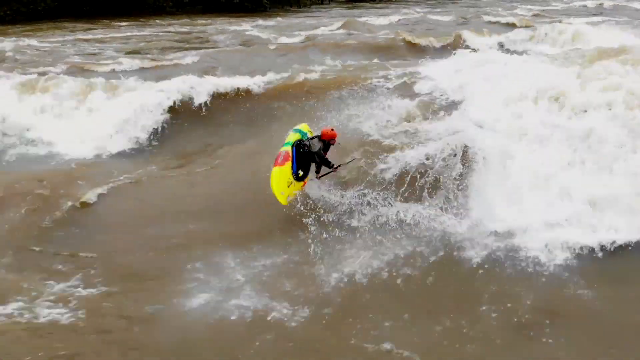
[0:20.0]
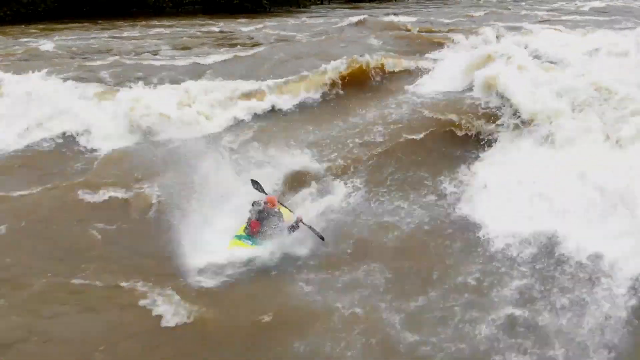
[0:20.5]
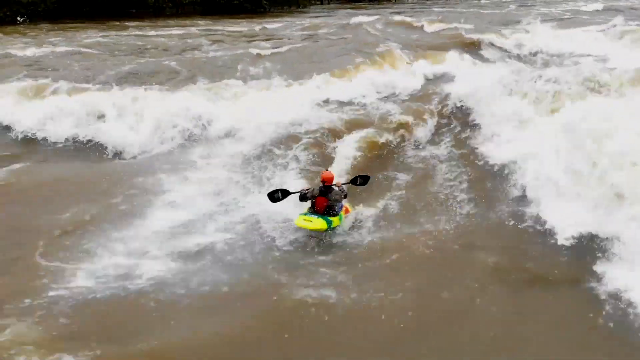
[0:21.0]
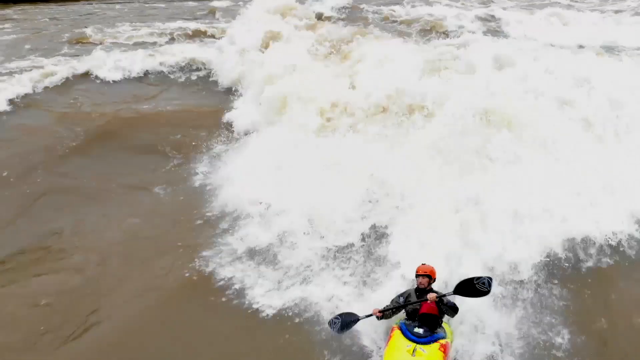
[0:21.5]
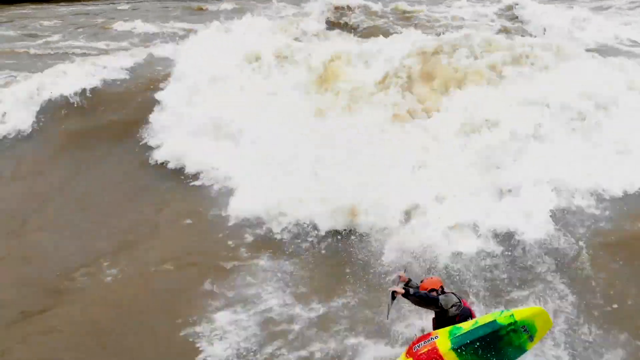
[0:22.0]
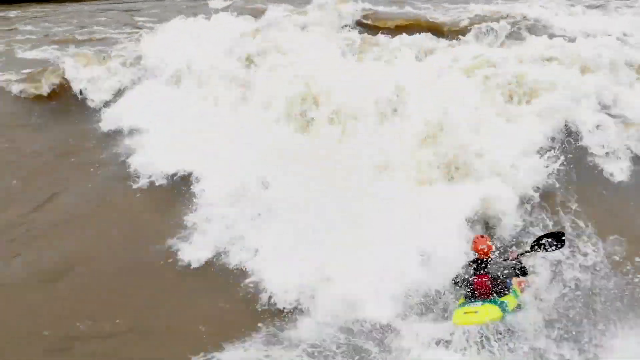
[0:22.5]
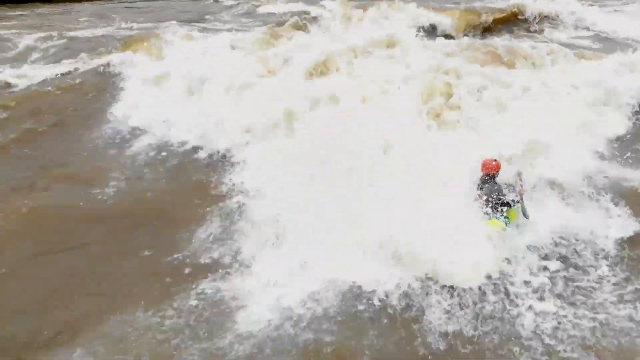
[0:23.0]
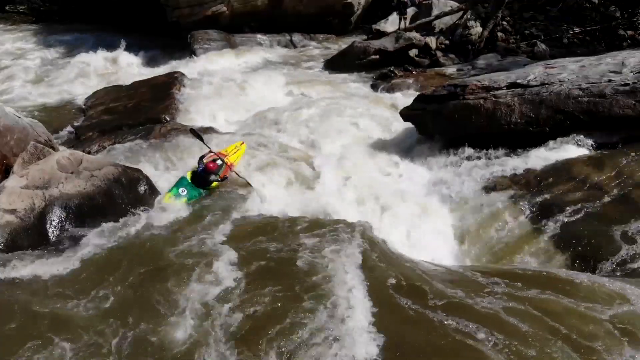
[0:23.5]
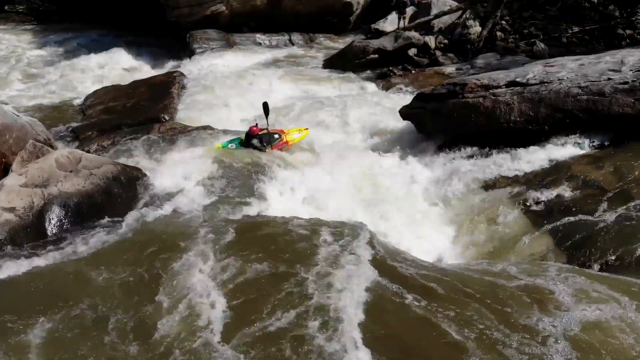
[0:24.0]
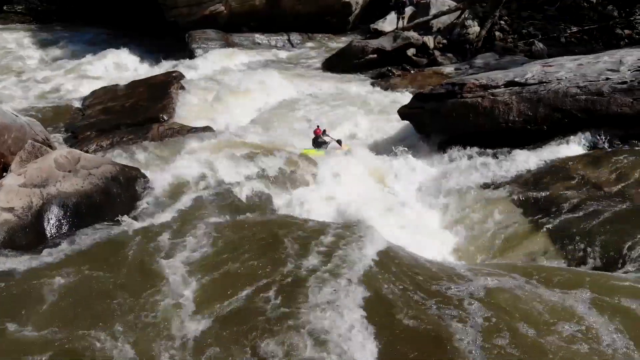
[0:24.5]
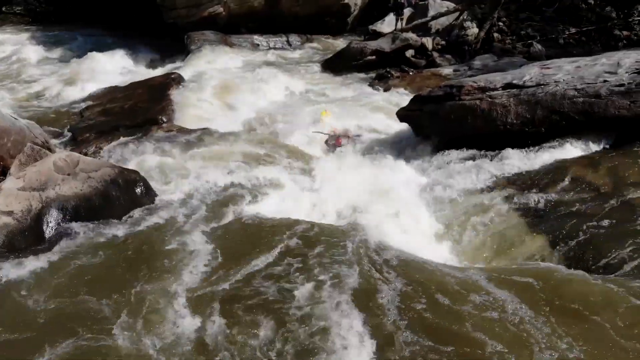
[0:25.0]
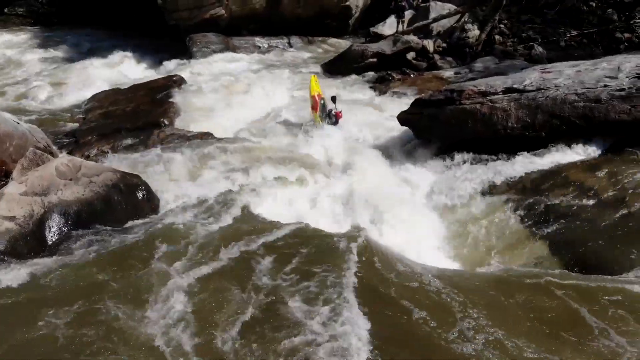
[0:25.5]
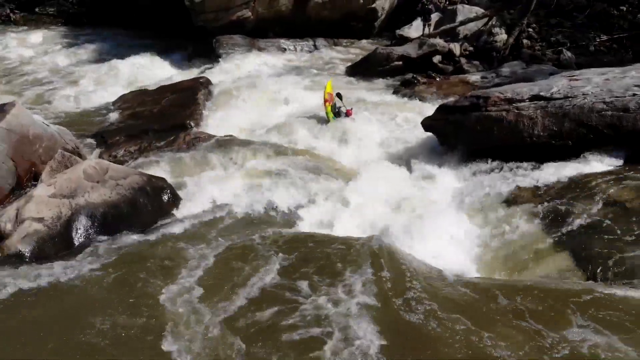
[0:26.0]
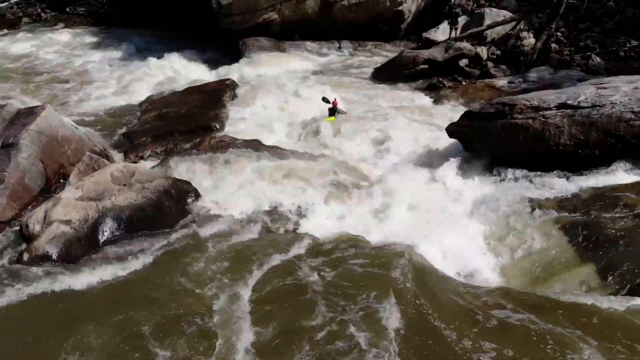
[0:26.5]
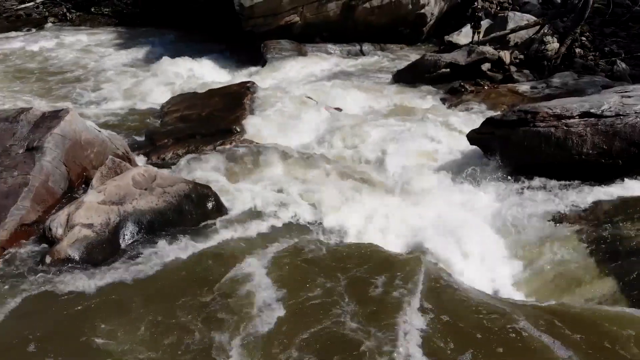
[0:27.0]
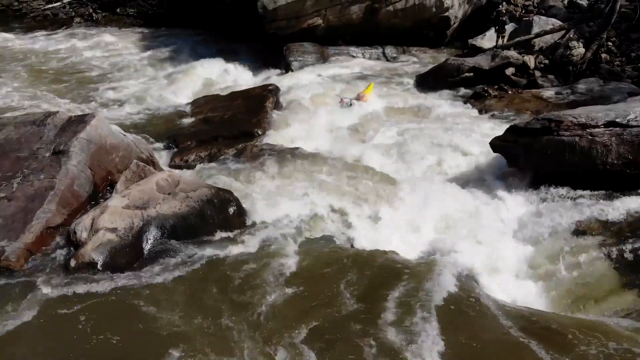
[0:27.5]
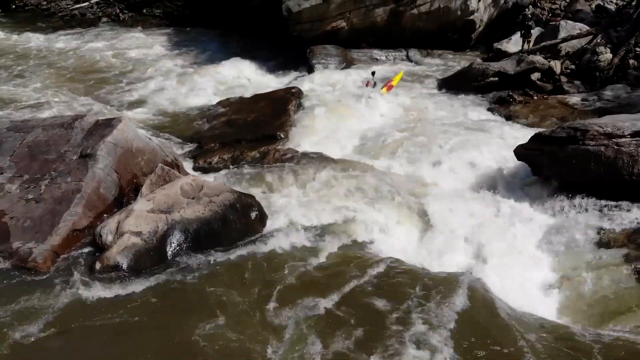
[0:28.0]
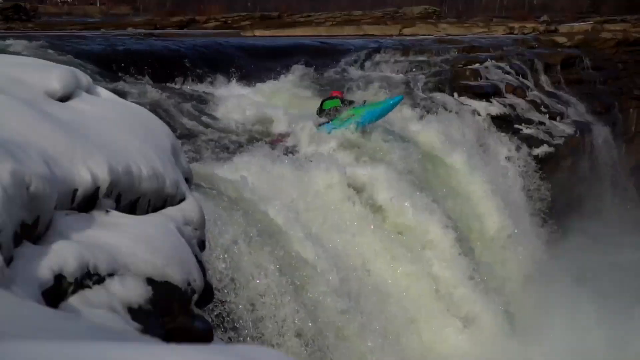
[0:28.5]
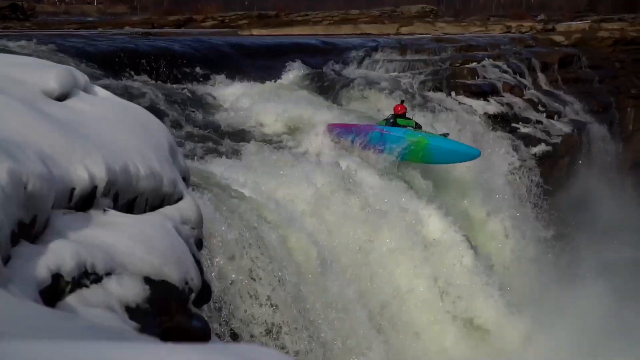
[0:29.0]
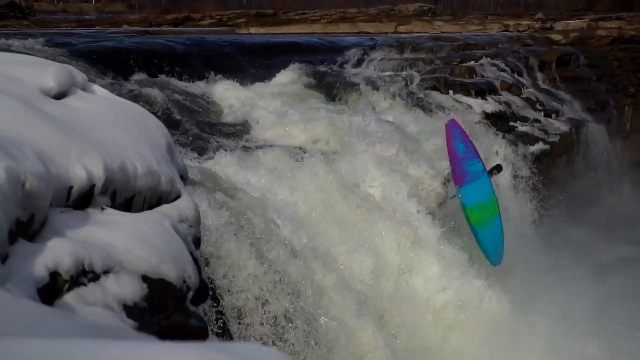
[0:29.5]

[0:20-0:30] Josh Collins continues canoeing as the run seems to become more intense, and he seems to be diving into a waterfall on the high-current stream. The water again seems very dirty, showing a brownish color, possibly from contamination by mud, soil or sand. Near the end he falls into a waterfall, and the water seems a bit cleaner on that side of the stream. After a while, the waterfall becomes visible.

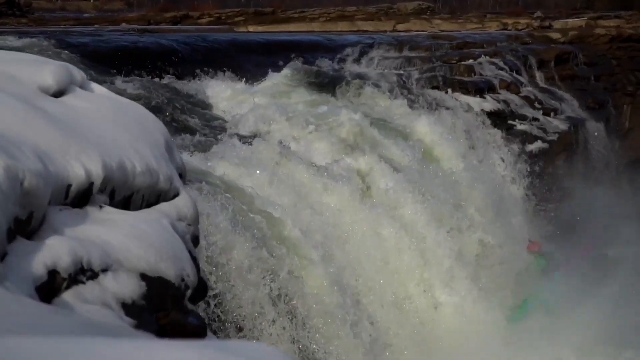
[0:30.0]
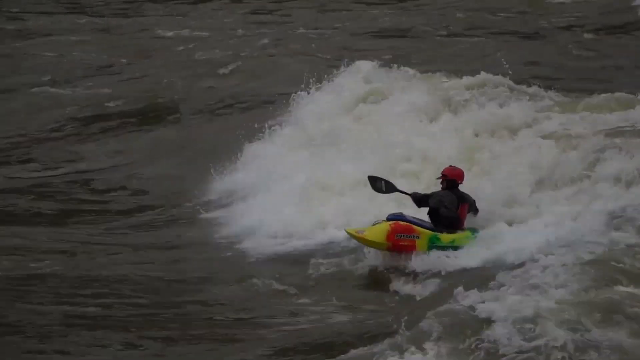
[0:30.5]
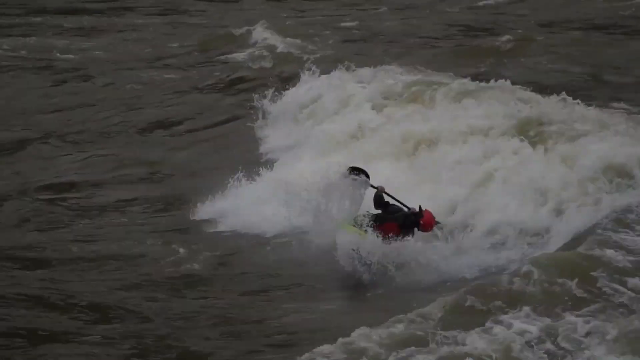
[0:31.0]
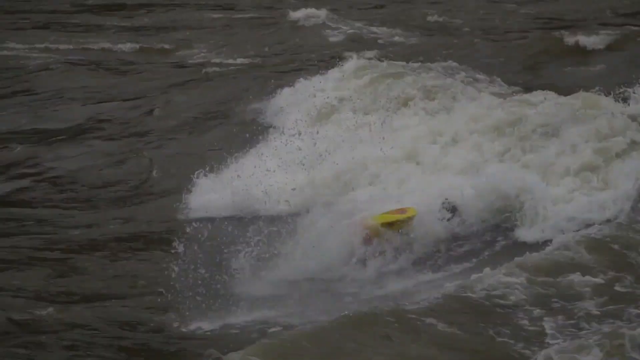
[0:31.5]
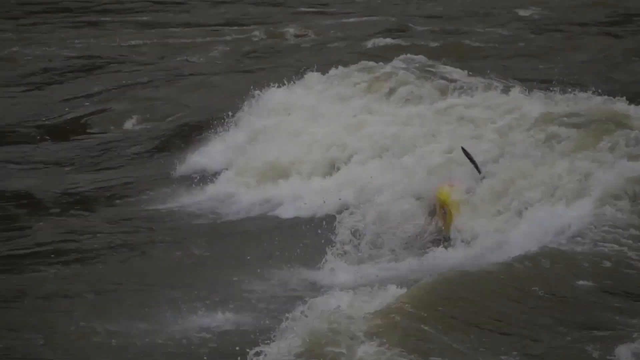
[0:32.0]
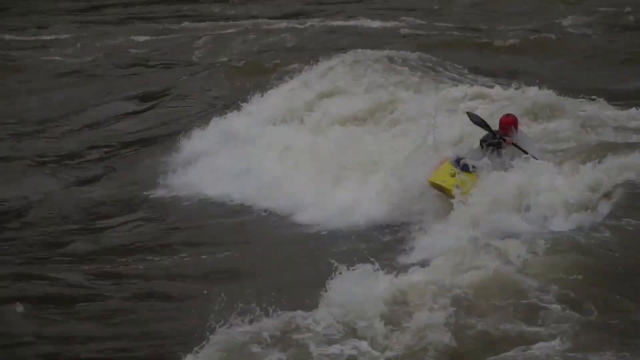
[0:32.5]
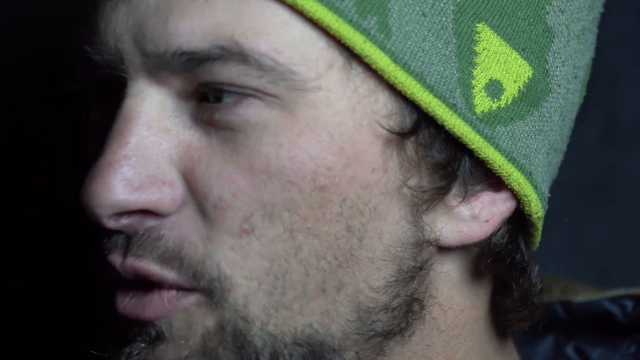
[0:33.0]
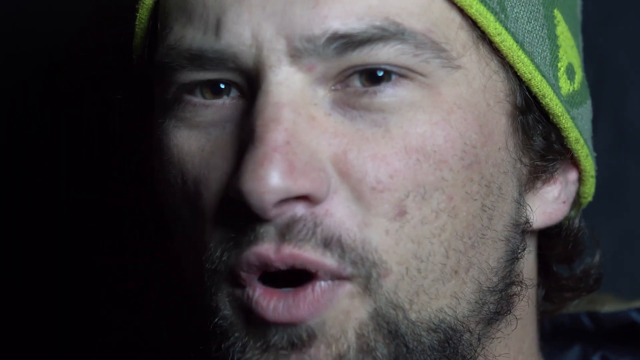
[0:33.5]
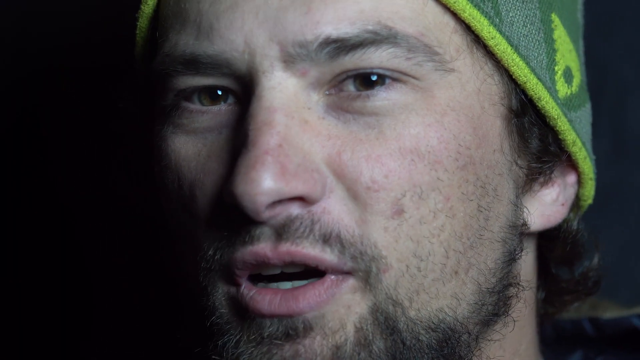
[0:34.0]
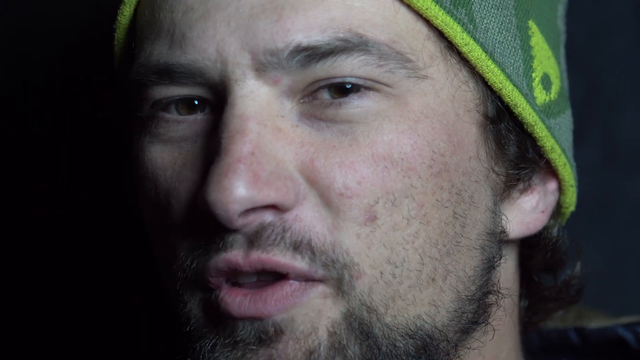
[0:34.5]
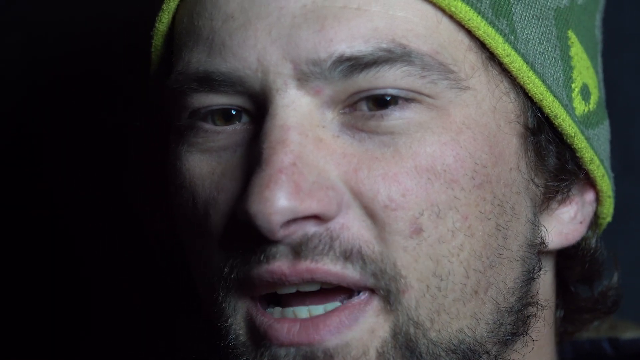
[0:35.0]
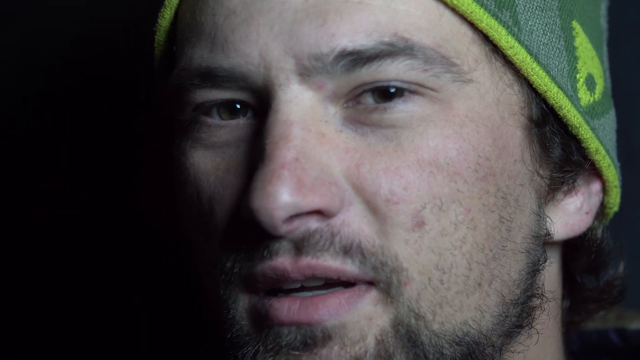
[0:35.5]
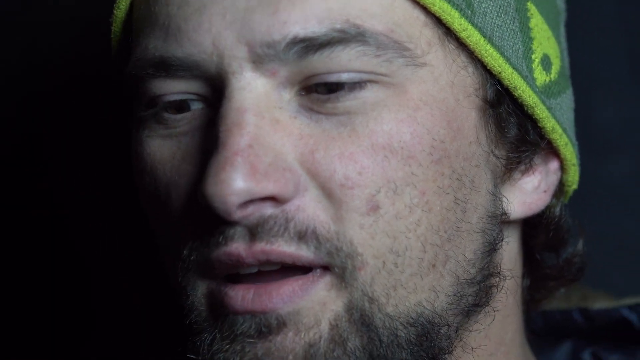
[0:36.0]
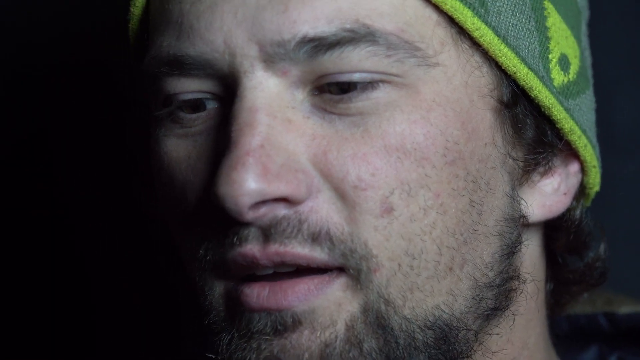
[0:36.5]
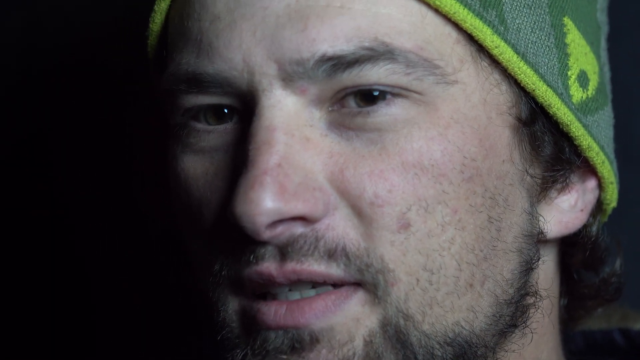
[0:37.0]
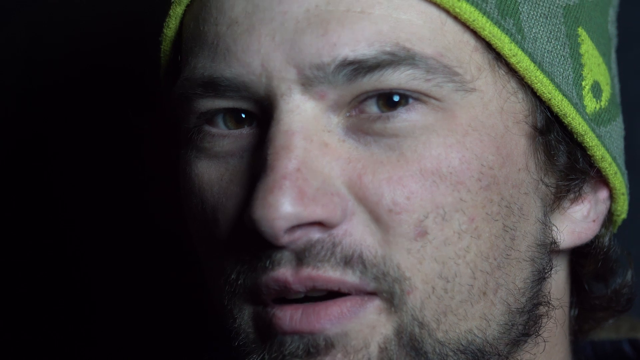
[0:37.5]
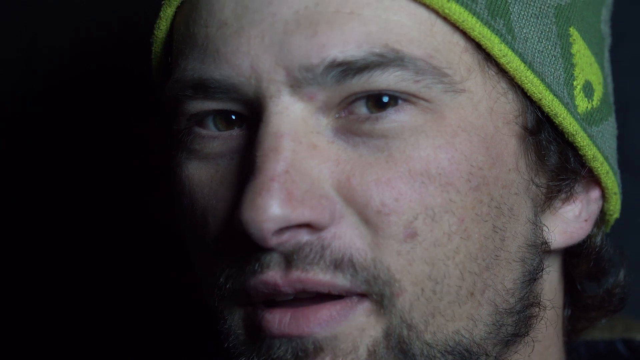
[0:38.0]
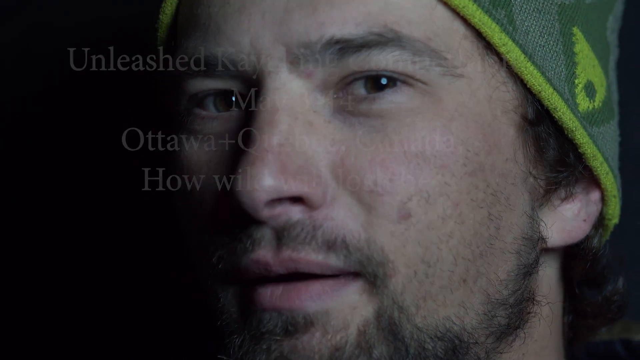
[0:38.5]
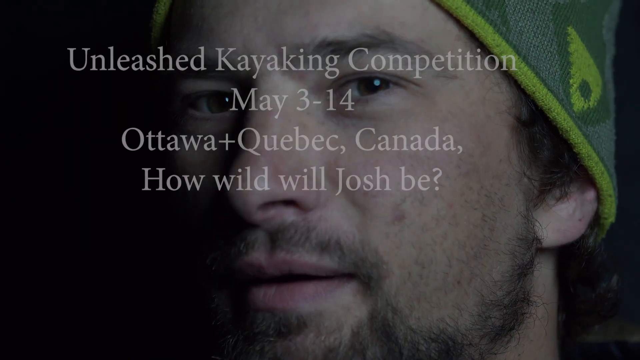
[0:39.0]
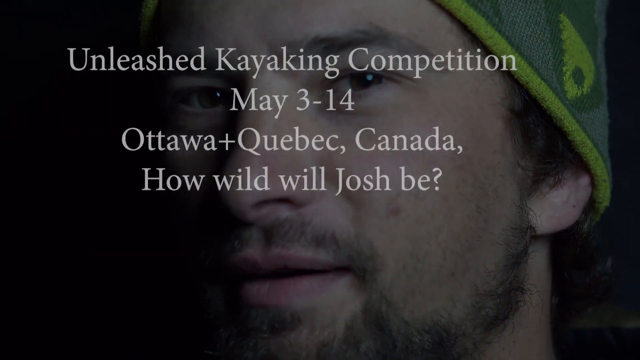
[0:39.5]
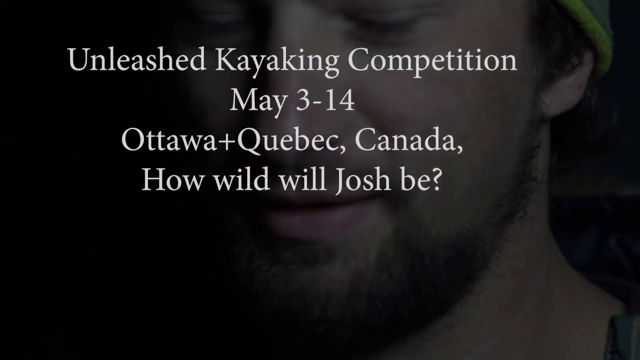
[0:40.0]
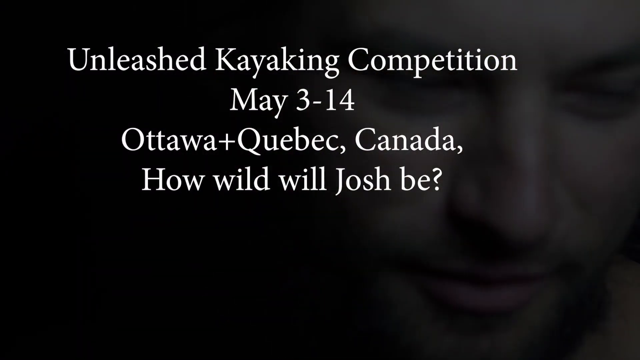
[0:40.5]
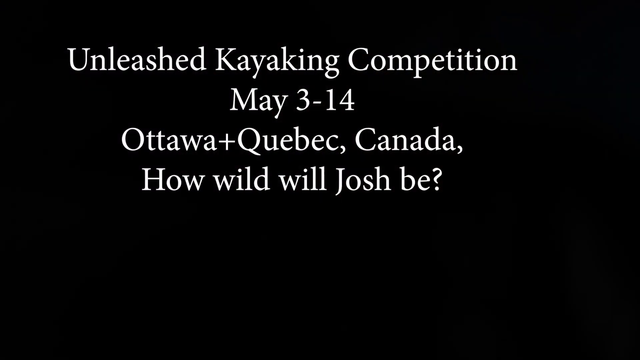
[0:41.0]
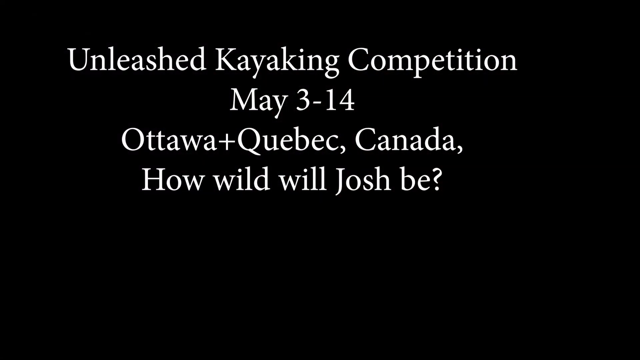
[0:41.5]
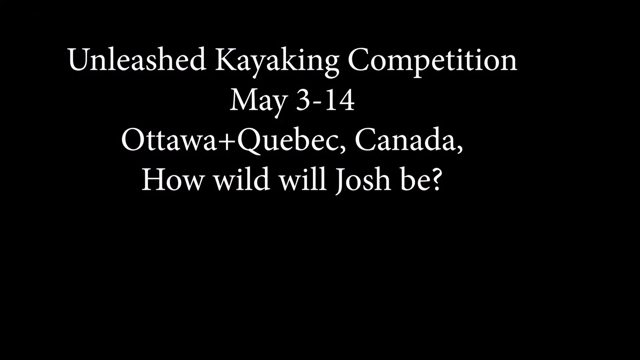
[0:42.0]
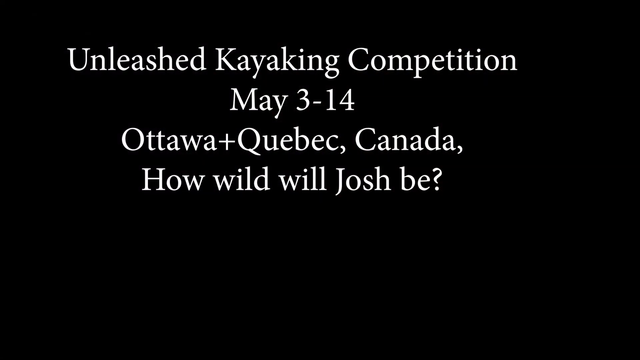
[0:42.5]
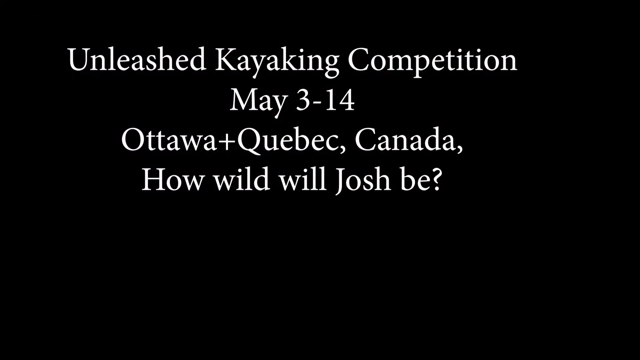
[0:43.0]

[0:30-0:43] Josh Collins does some sort of dives in the air while in the canoe. He seems to be on a safer side of the stream, where the water seems a little gentler. After he lands back on the surface of the water, the video cuts to Josh Collins narrating, and text is displayed as the video ends, showing that the event will take place in Ottawa, Canada, from May 13 - 14.